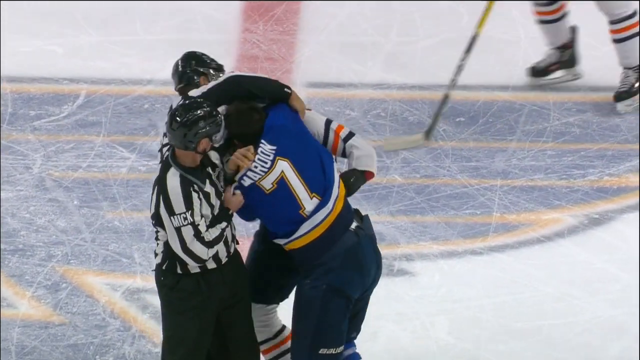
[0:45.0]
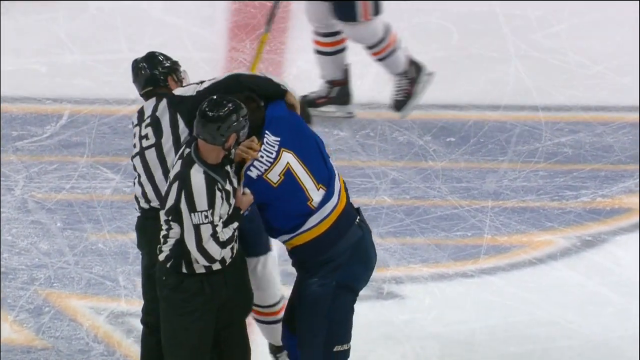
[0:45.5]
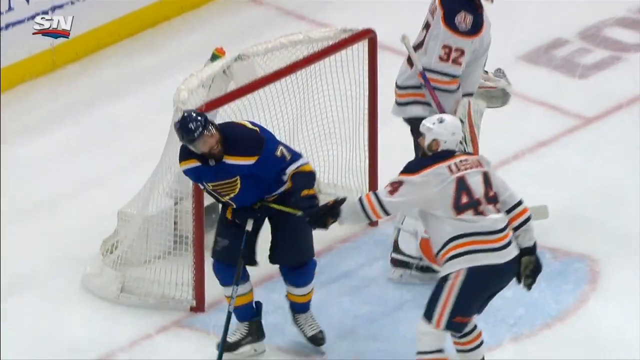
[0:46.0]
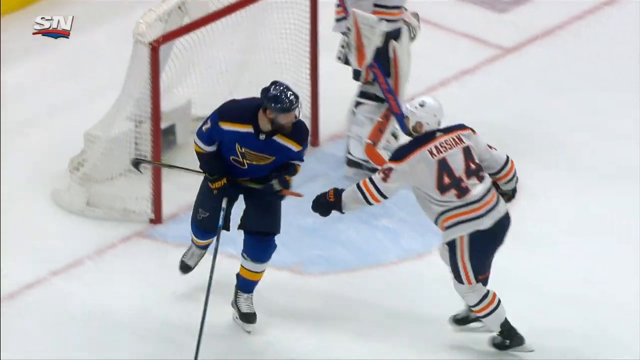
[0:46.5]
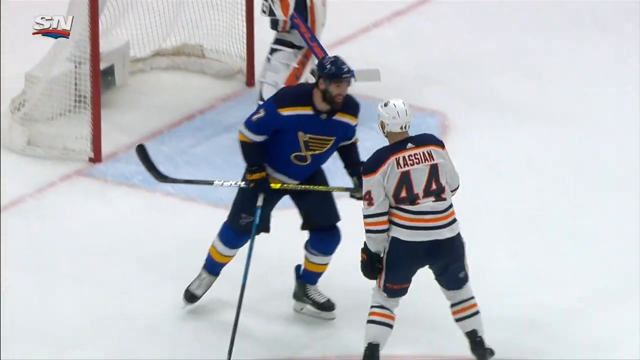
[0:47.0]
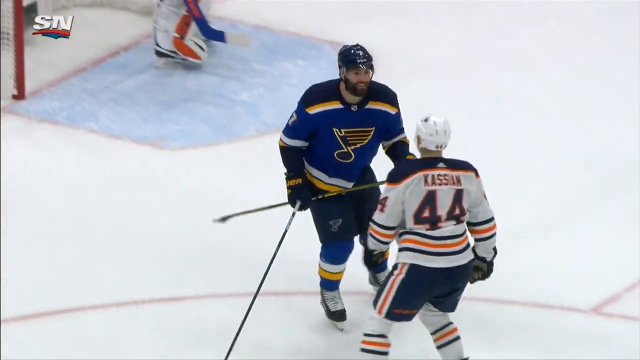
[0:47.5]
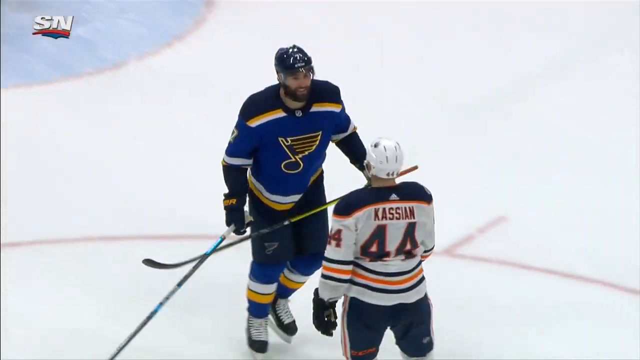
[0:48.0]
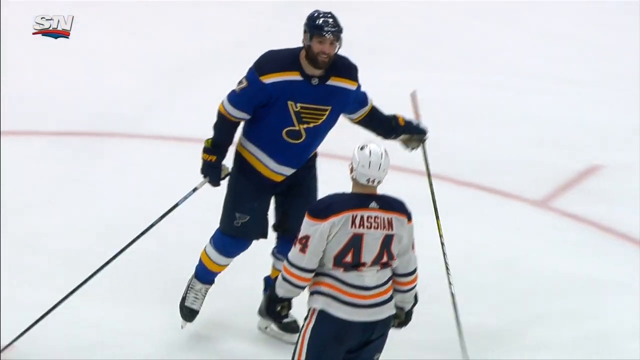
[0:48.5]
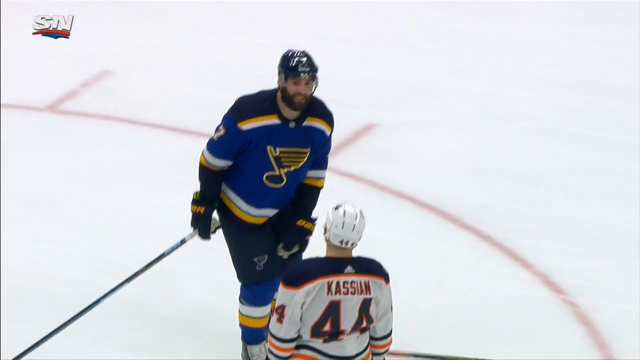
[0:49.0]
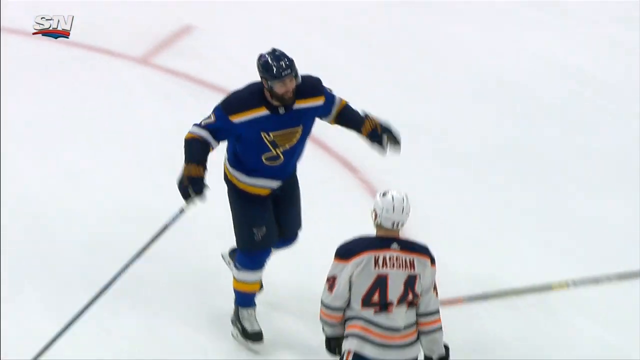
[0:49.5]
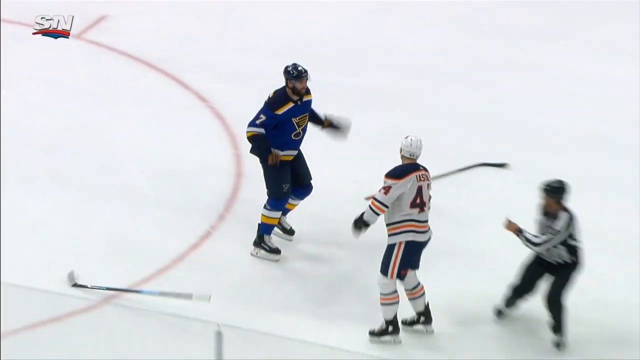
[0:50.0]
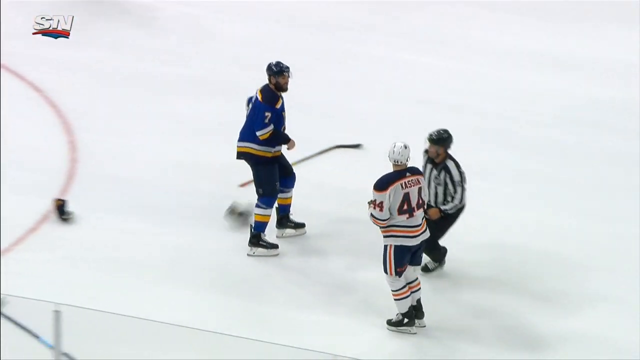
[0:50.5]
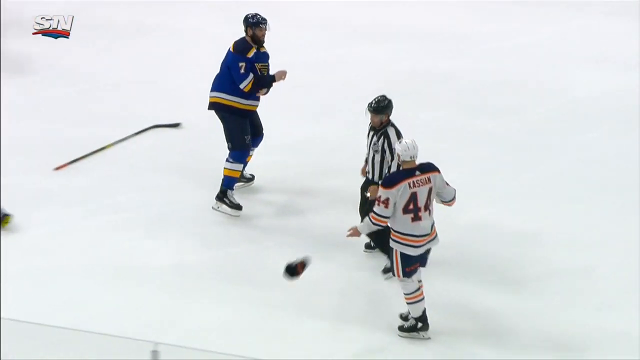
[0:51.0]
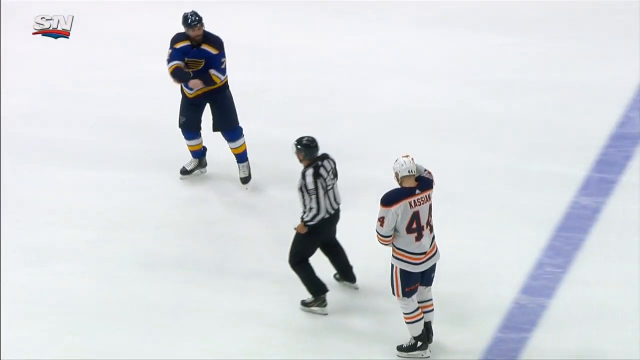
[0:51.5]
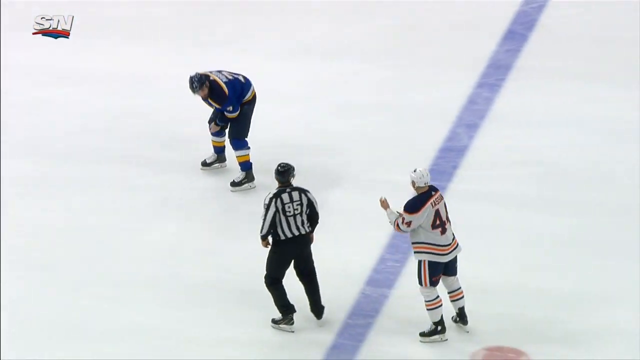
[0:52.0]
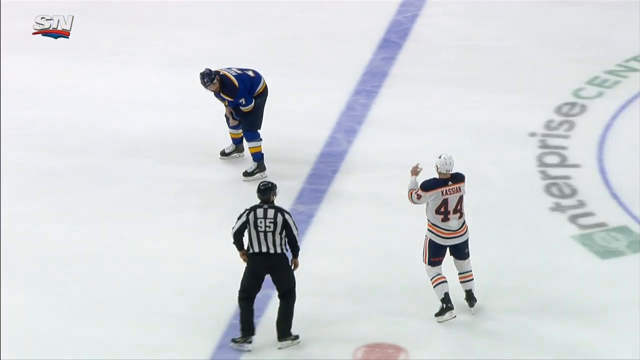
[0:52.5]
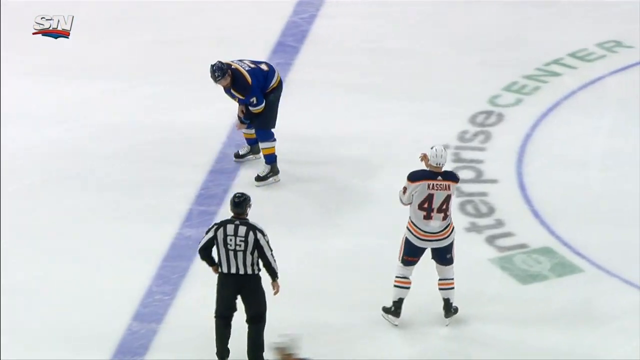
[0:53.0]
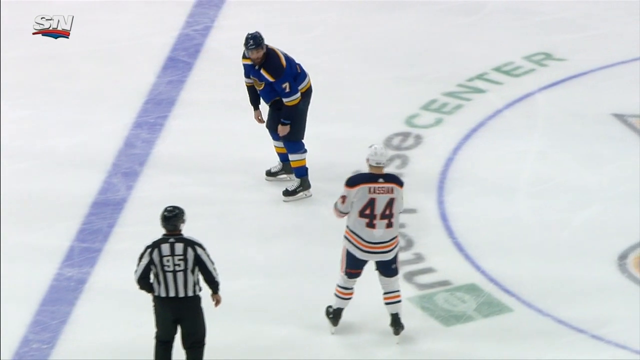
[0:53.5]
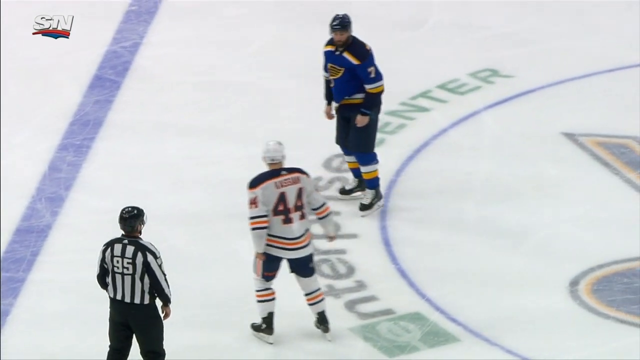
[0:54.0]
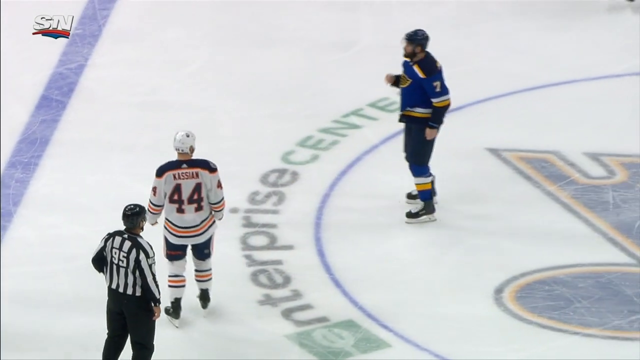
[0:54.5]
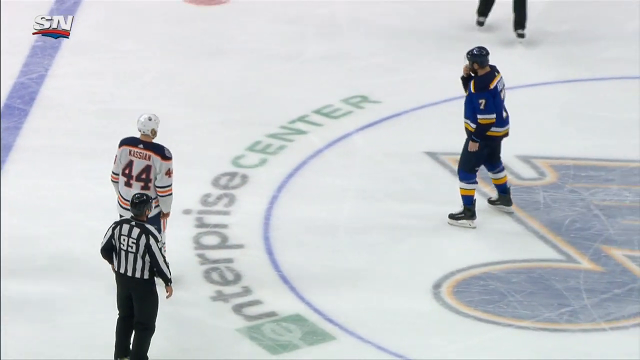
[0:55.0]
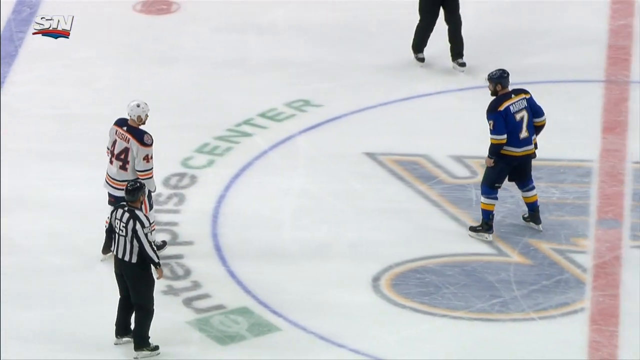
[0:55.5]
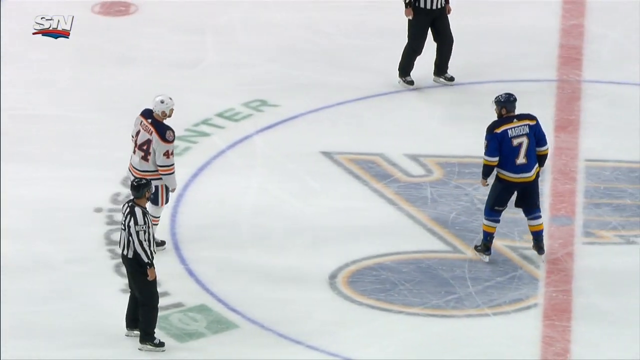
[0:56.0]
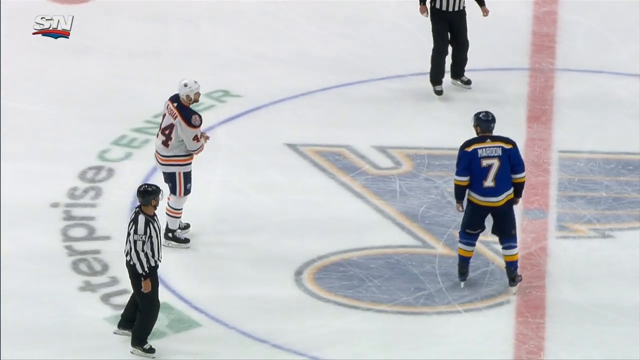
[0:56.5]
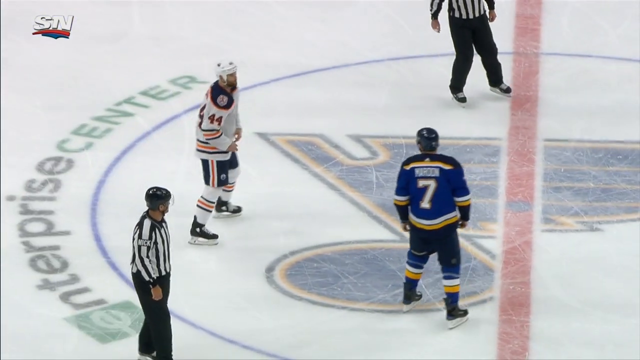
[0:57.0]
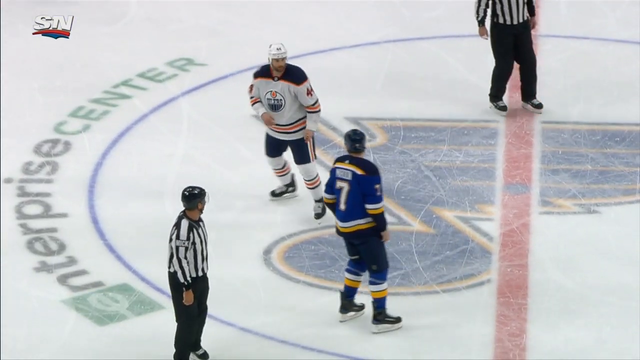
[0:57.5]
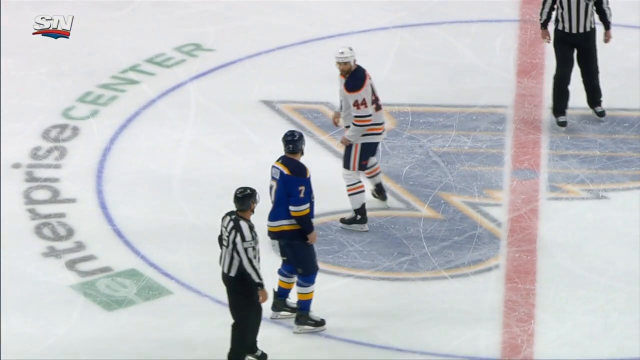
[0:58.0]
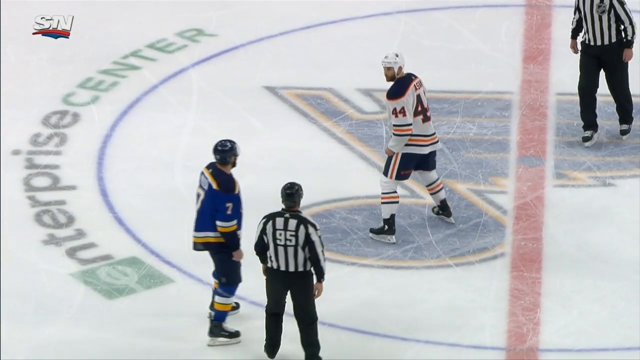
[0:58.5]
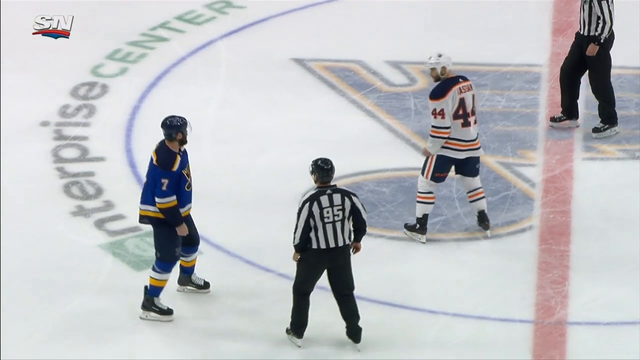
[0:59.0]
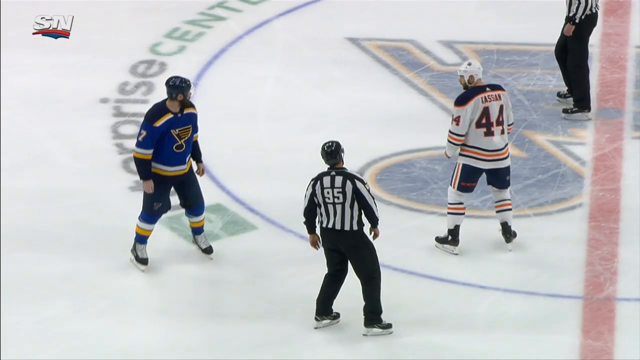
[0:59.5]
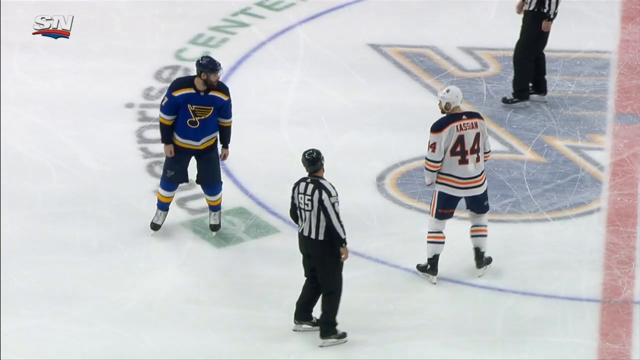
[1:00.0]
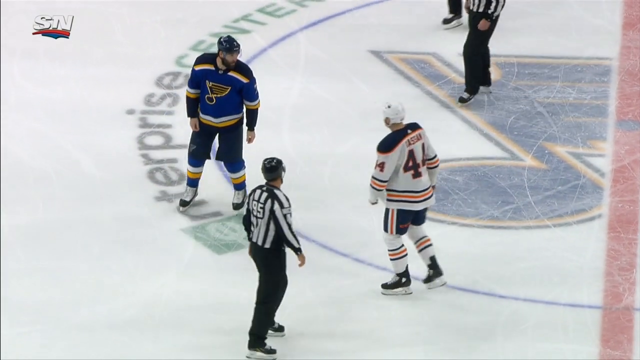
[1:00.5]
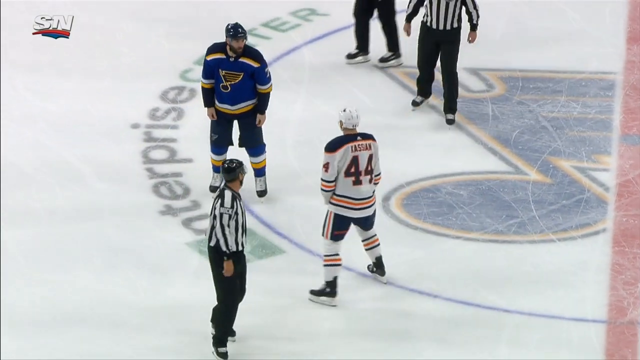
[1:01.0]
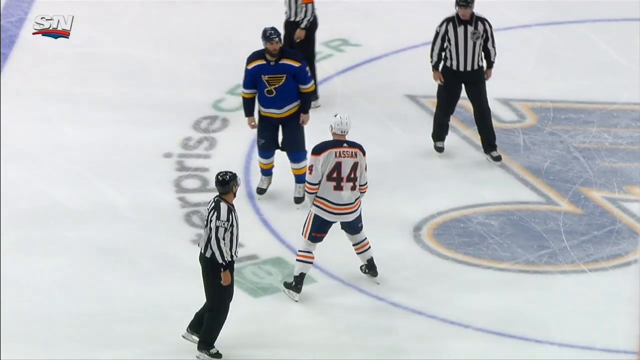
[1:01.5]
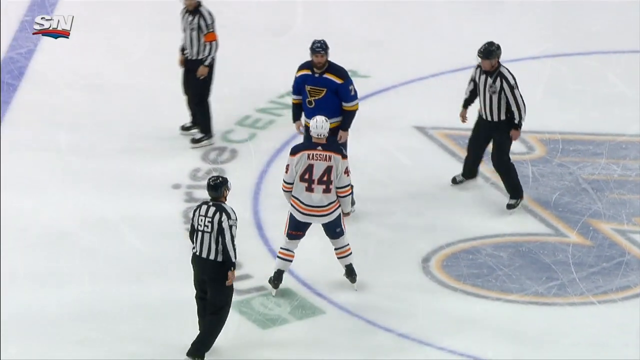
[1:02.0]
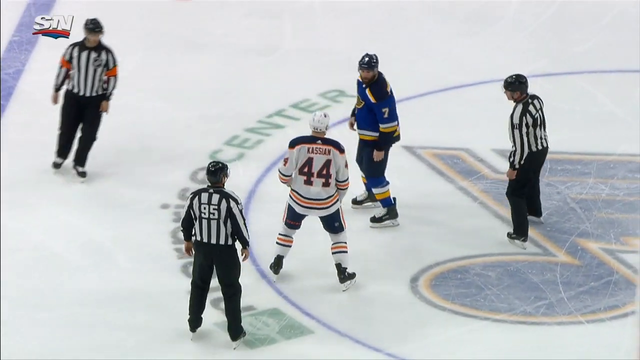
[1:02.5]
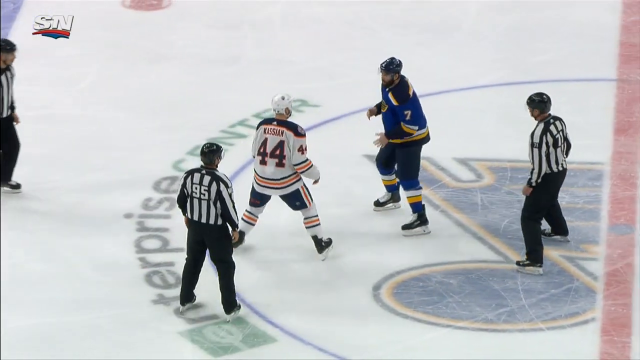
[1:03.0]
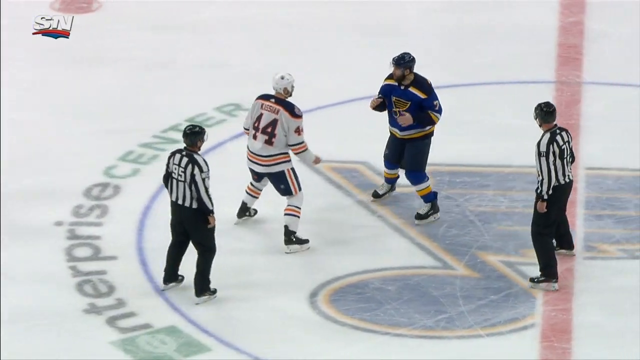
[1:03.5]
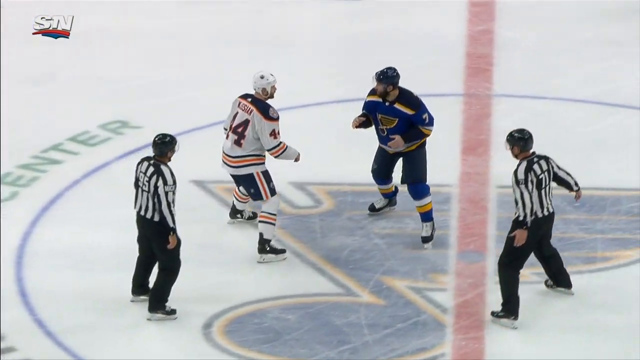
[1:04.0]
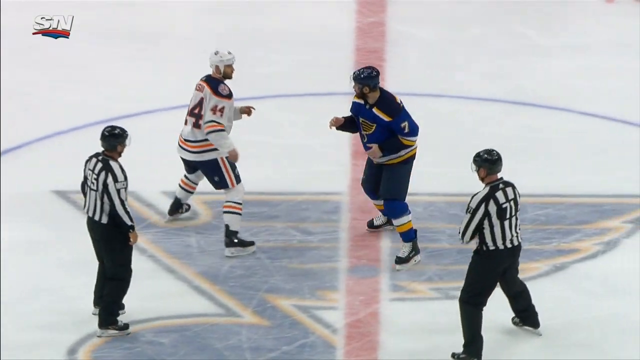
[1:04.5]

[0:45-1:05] A very brief shot shows the end of the first fight, and then the video quickly cuts to a scene where the players engage in another fight. This fight begins when Maroon grabs Kassian's stick and pulls it away near the other goal. The two then skate slowly toward center ice, accompanied by two referees. Both players throw their gloves off and push their sleeves up. Once they reach center ice, only two referees, then three referees, and the two fighters are visible.